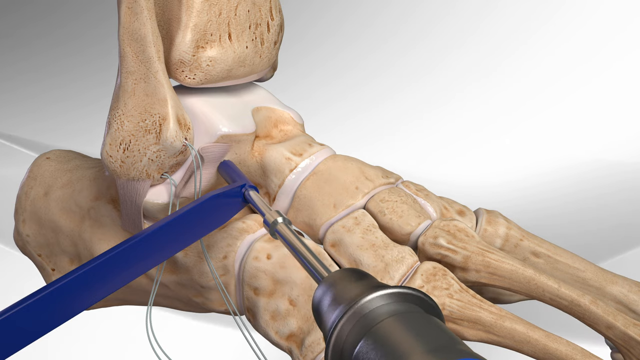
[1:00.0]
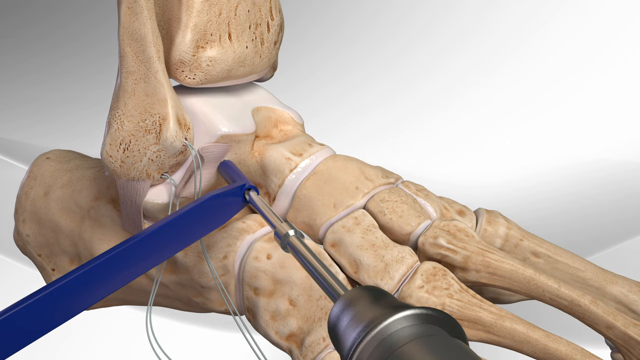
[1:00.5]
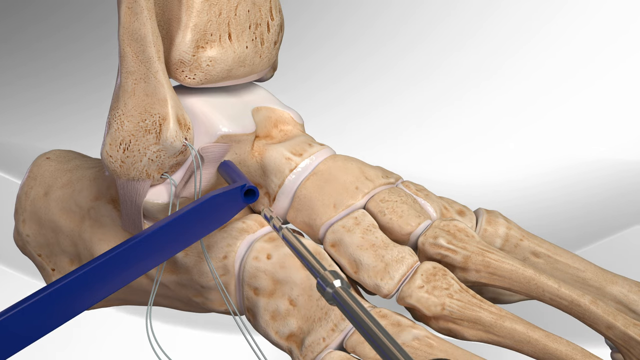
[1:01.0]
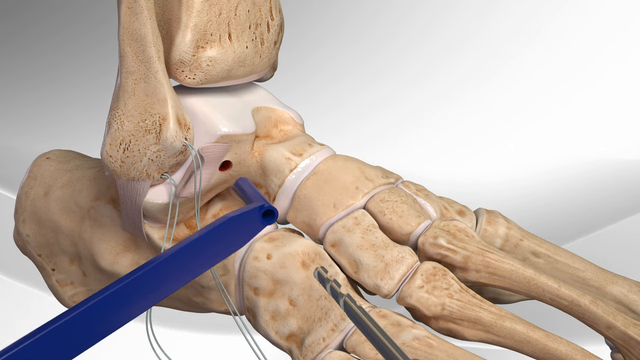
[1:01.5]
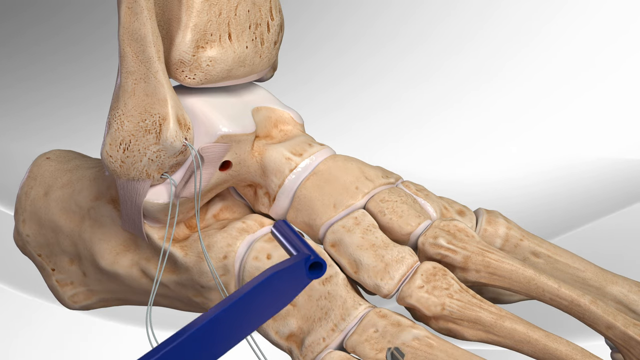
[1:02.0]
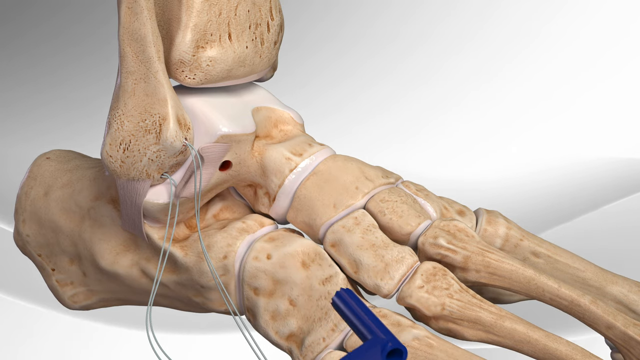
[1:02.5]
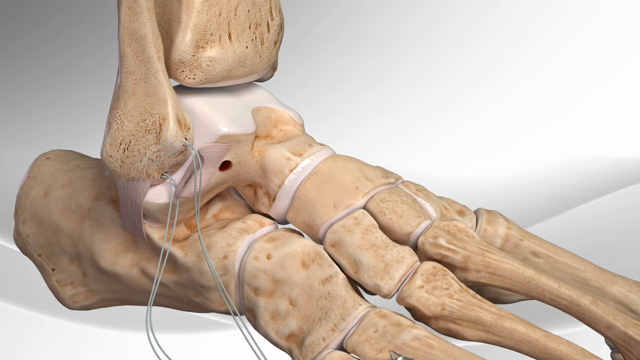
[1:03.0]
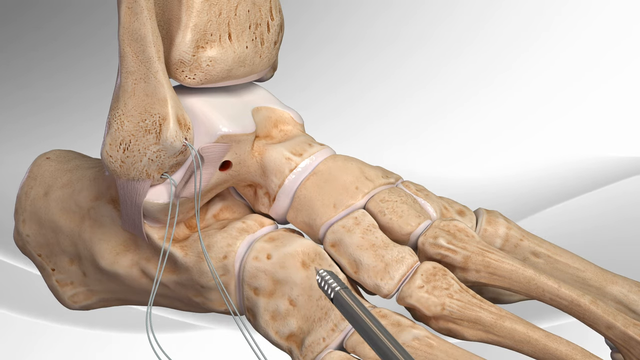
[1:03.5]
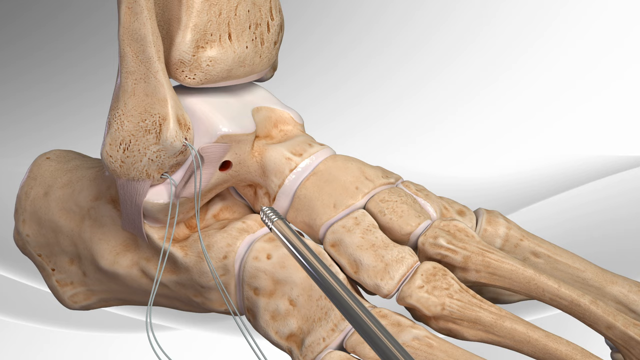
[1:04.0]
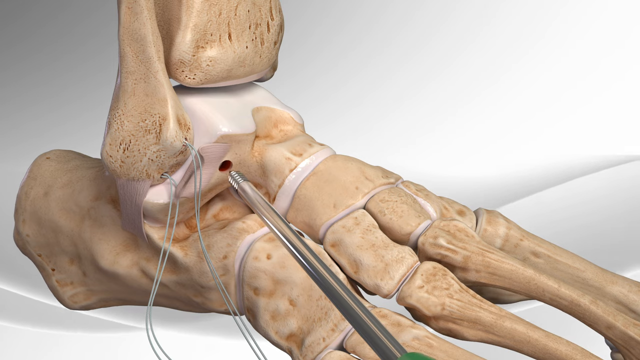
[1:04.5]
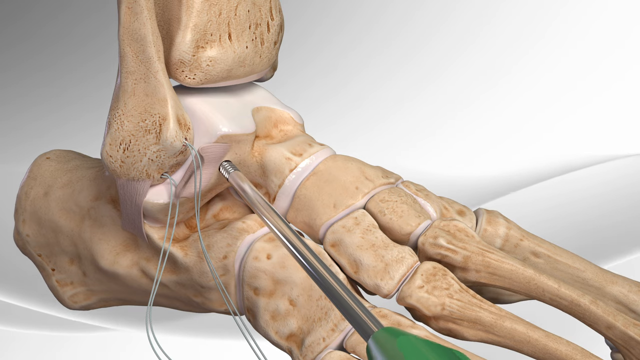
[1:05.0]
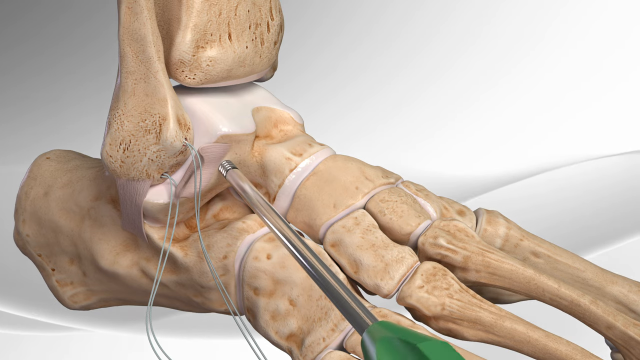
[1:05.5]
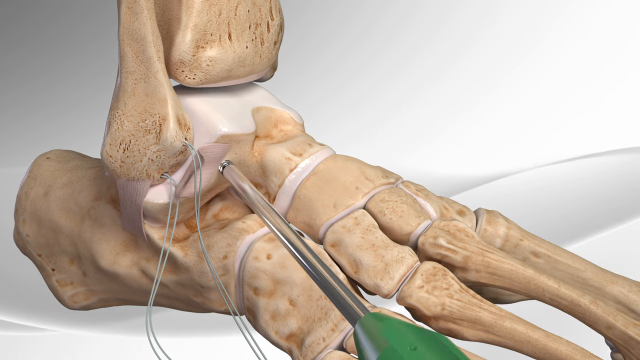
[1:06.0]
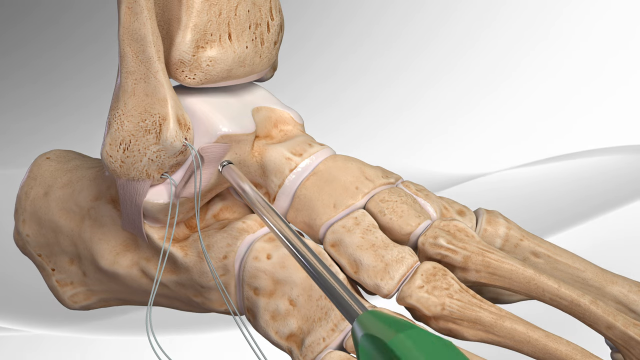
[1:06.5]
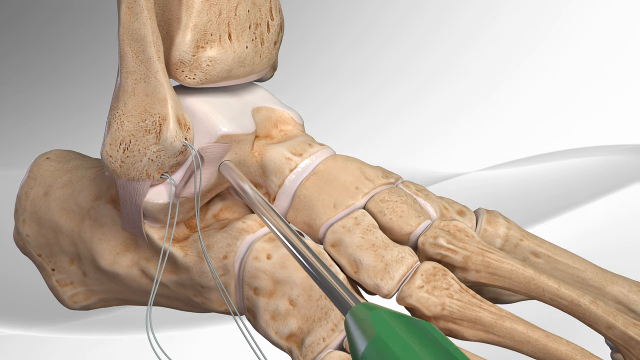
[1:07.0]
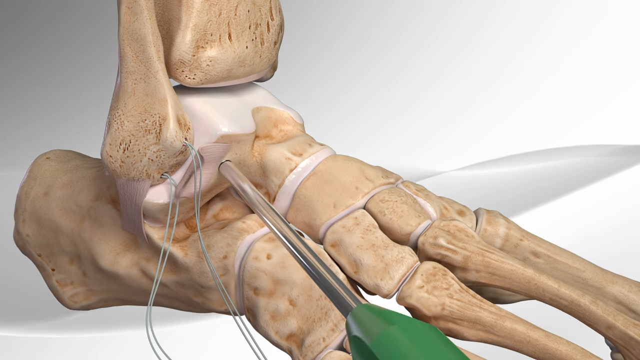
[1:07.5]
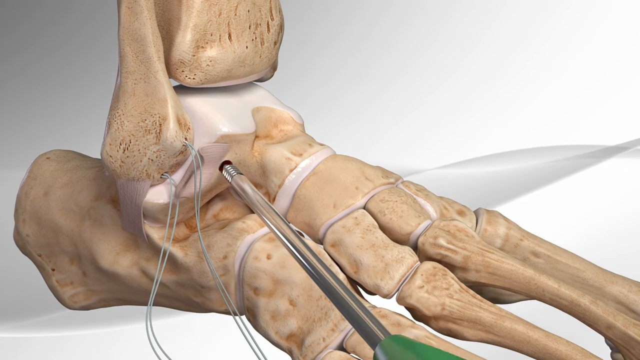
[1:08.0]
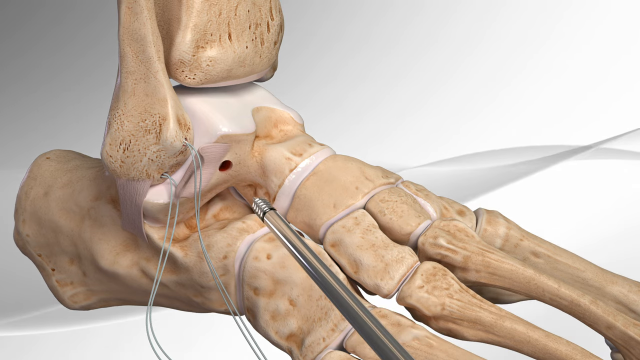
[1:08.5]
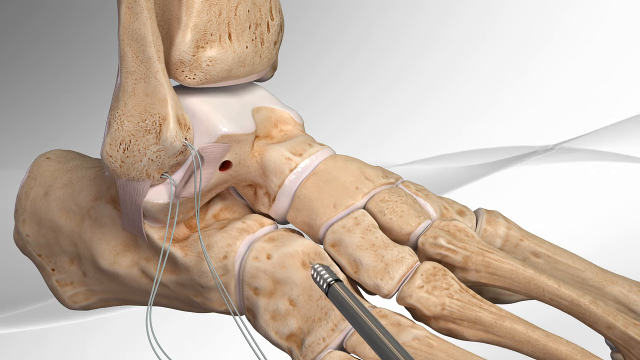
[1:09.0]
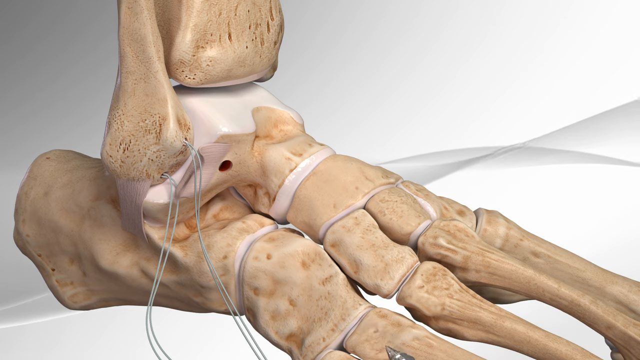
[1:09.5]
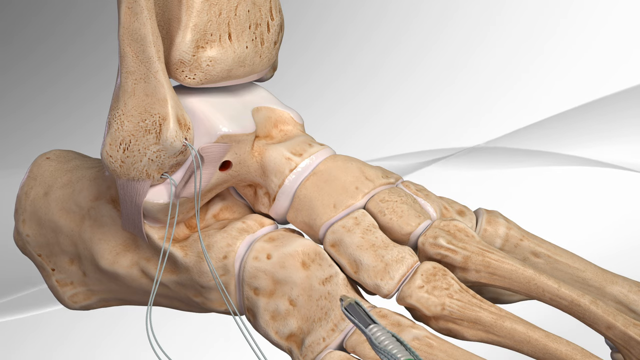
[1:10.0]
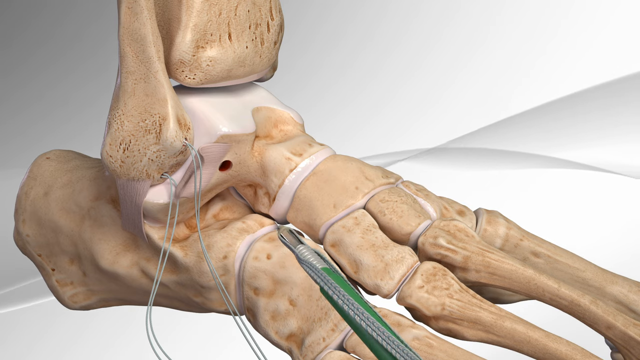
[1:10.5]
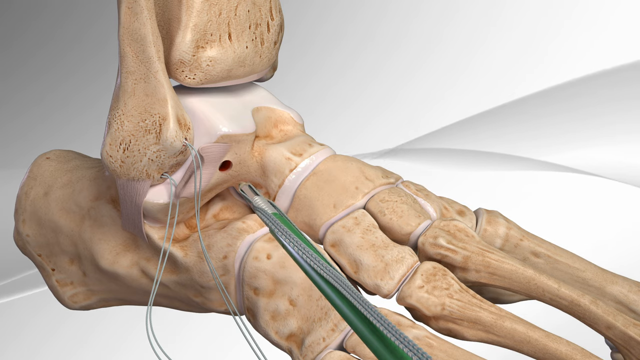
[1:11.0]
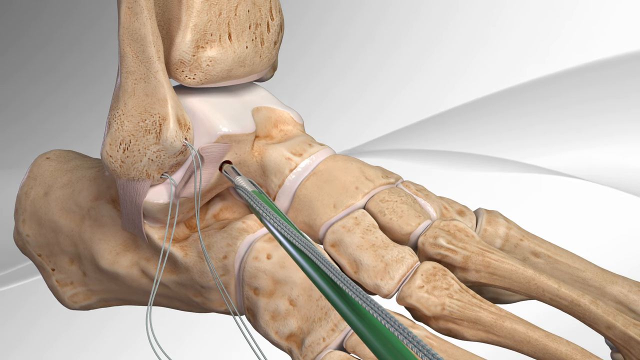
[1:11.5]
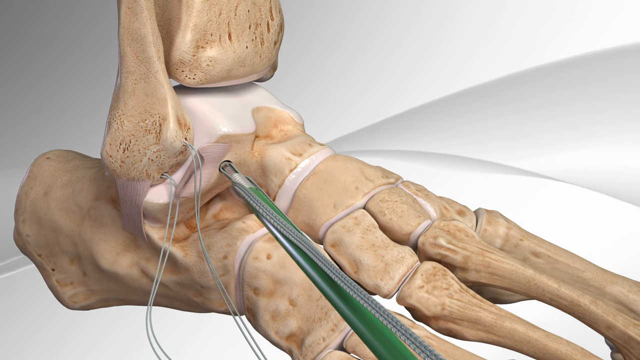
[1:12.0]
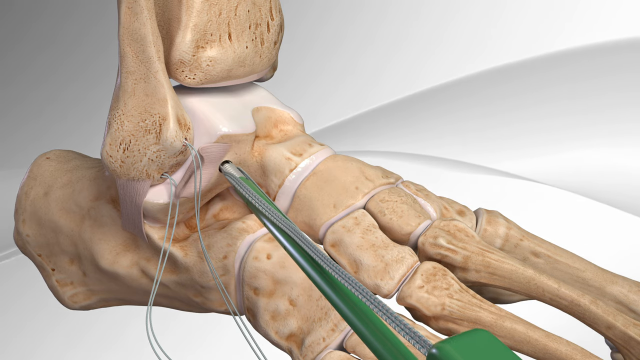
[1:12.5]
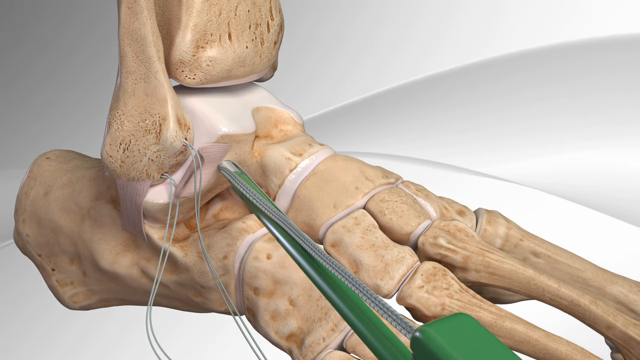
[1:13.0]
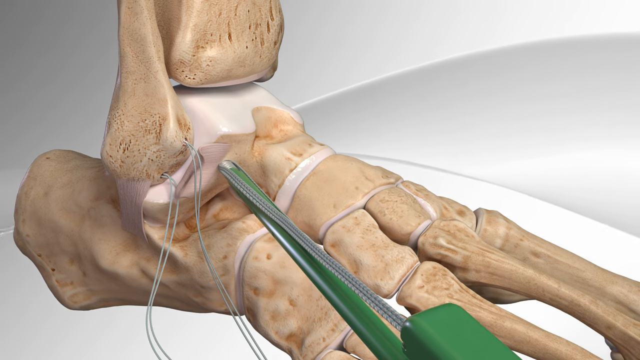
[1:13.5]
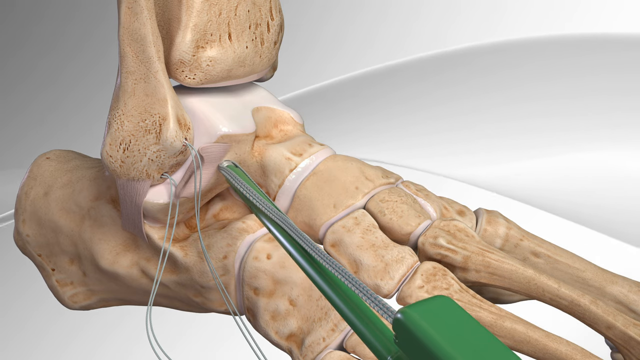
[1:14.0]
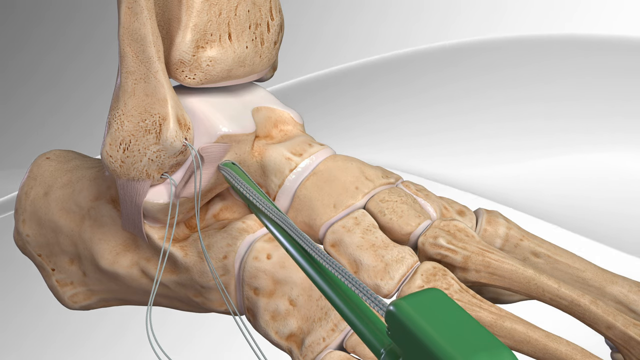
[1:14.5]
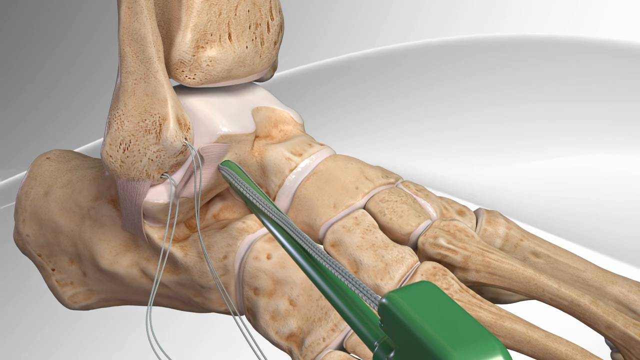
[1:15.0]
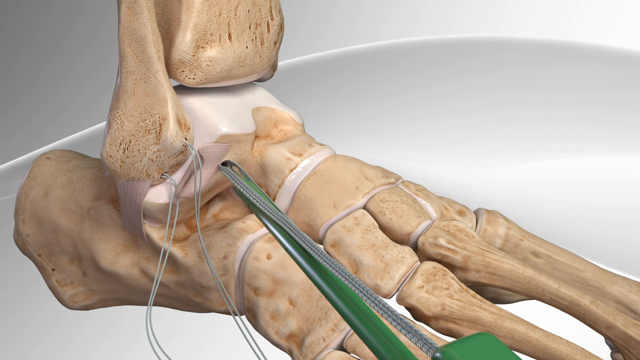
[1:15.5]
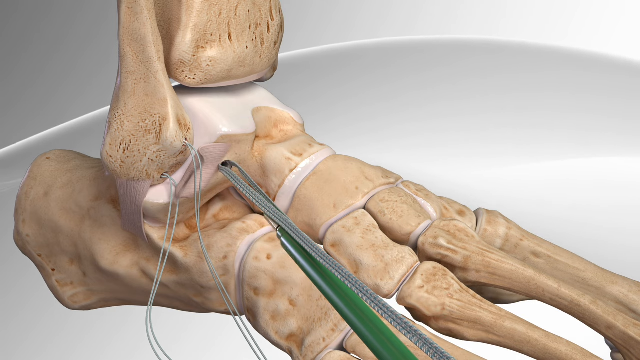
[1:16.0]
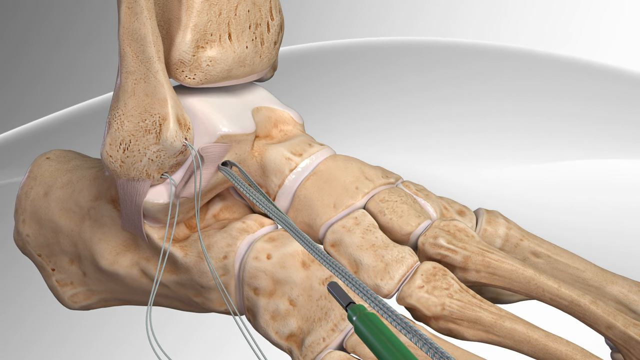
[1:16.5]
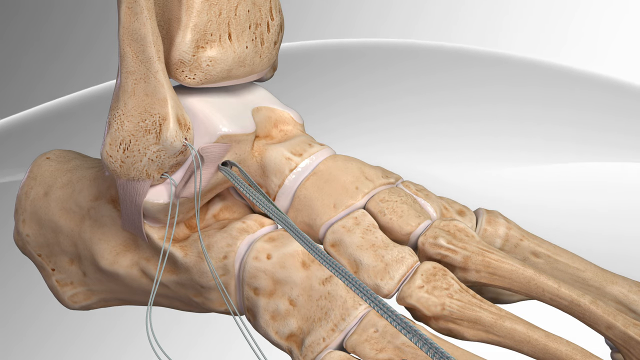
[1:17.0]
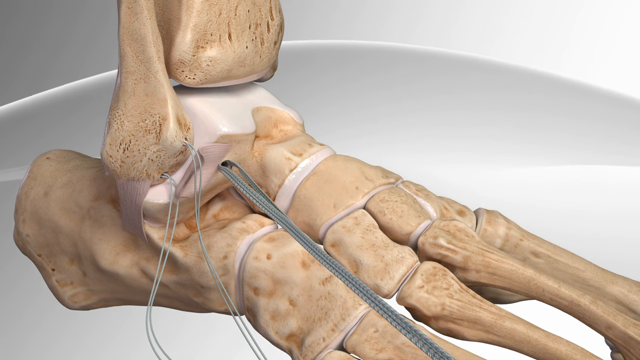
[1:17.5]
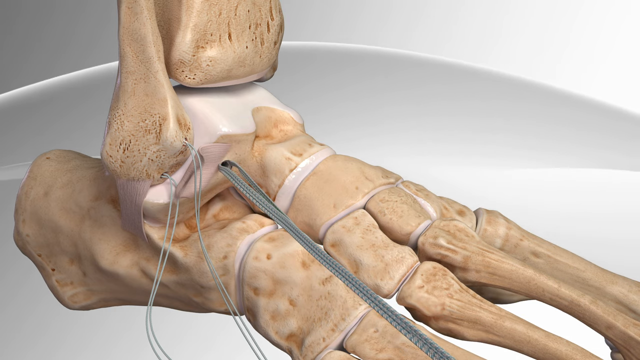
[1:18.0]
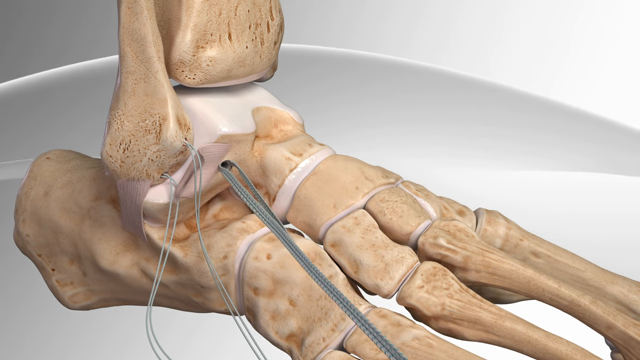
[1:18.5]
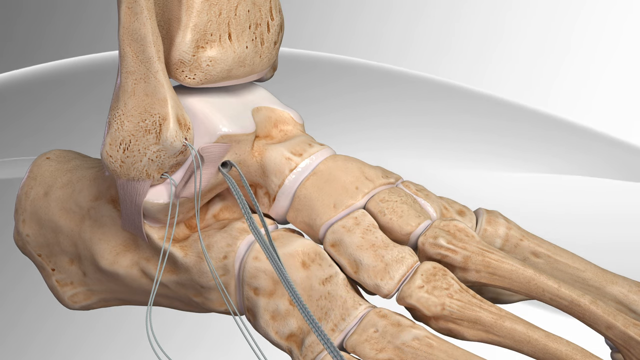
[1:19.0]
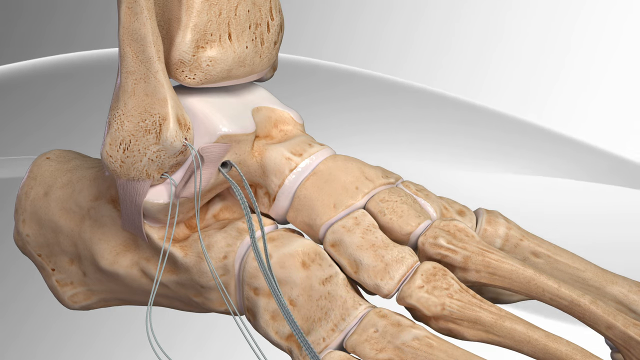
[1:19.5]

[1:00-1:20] The drill in the blue hollow instrument drills the third hole, in a separate bone below the first two holes, which have wires or leads coming out of them. Both instruments pull back out of sight, and the hole made in the bone is visible. A new green instrument, similar to the one that placed the first wires, comes in; it looks like it bores the hole out even more and then places leads or wires in the same way, but these are thicker. Each of the three holes has two wires or leads, and the third hole is larger, as are the leads or wires coming out of it.